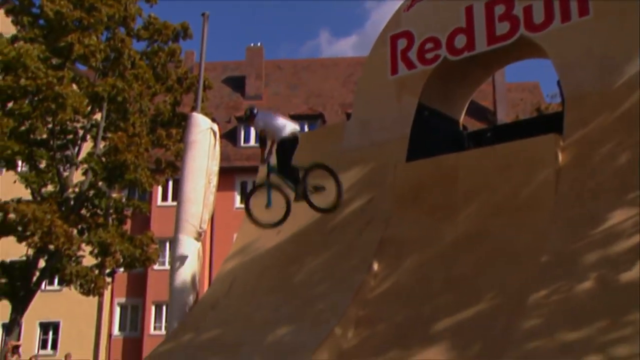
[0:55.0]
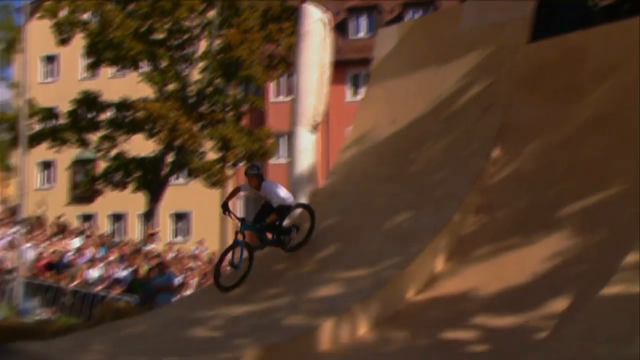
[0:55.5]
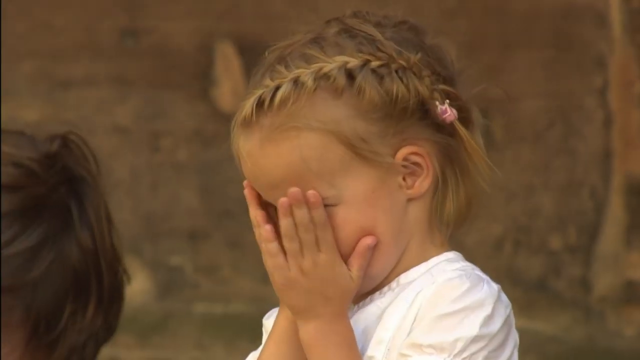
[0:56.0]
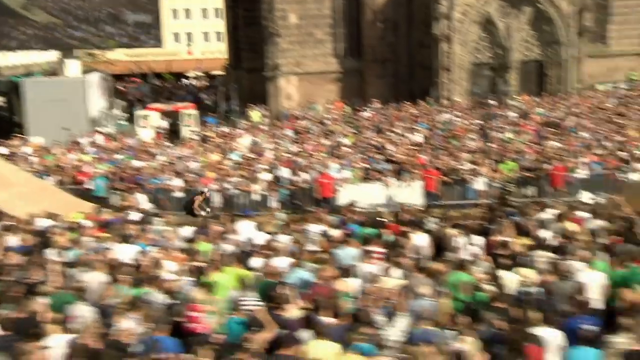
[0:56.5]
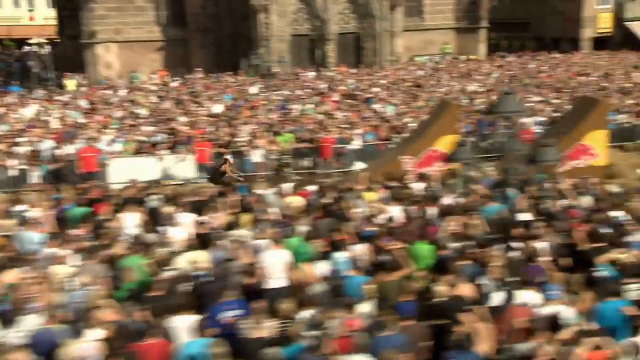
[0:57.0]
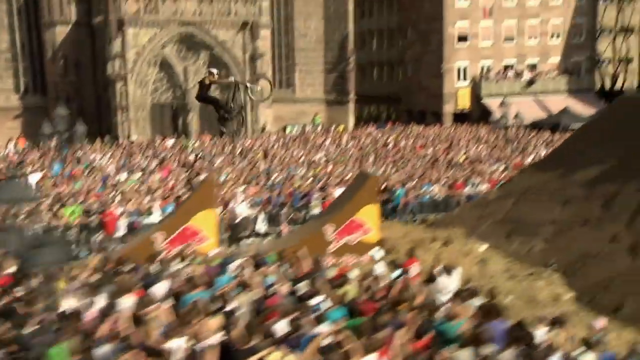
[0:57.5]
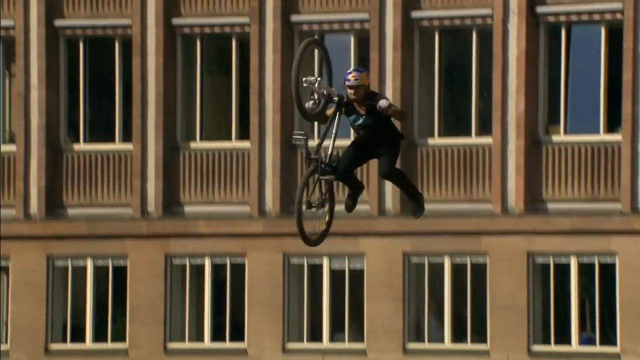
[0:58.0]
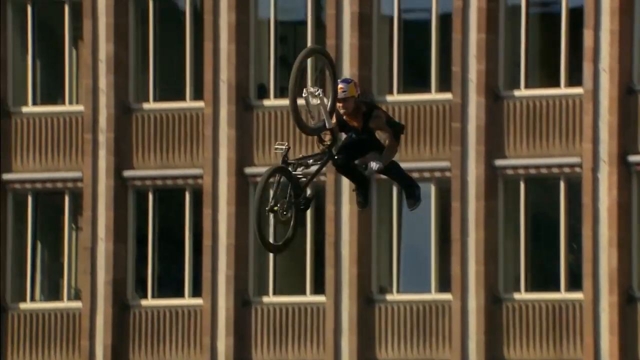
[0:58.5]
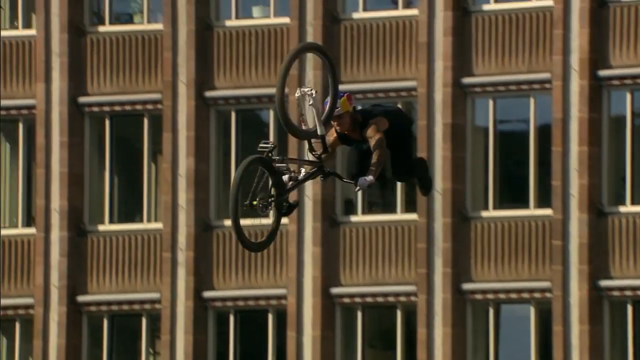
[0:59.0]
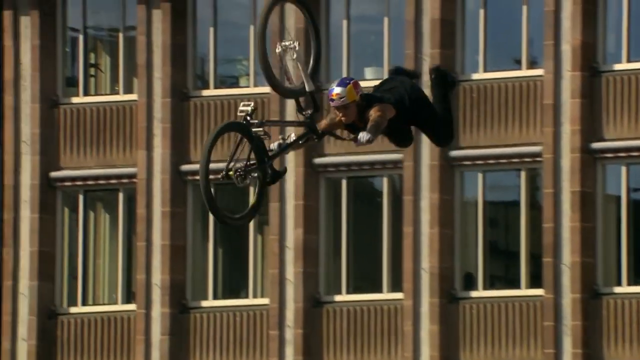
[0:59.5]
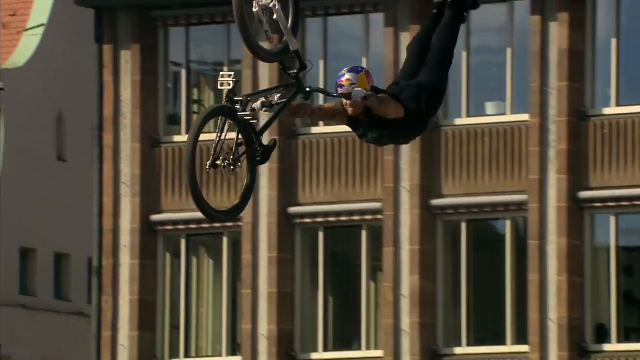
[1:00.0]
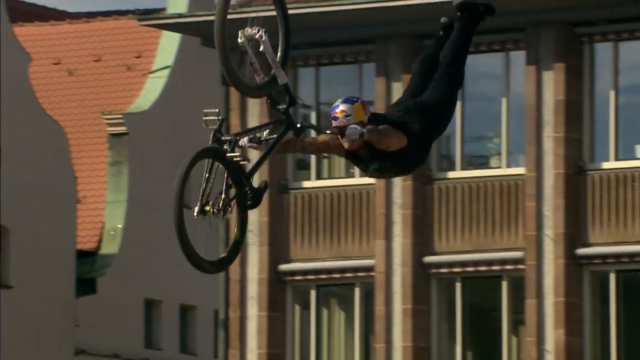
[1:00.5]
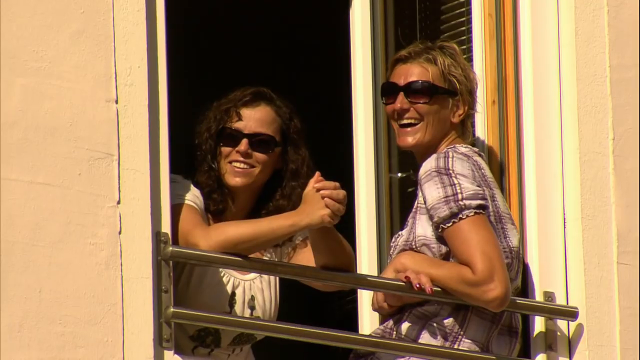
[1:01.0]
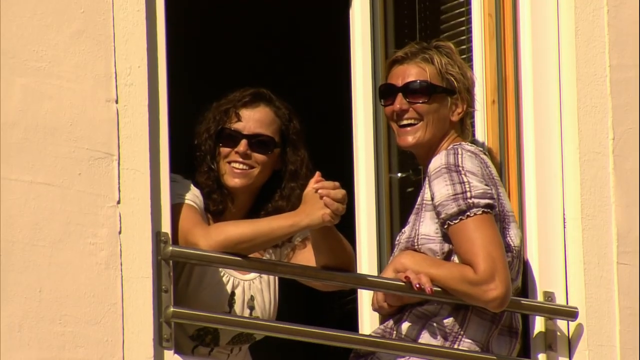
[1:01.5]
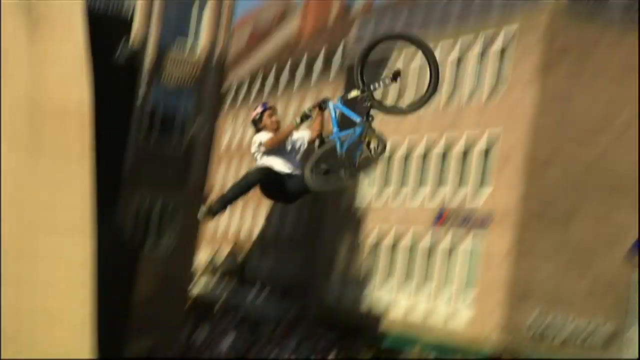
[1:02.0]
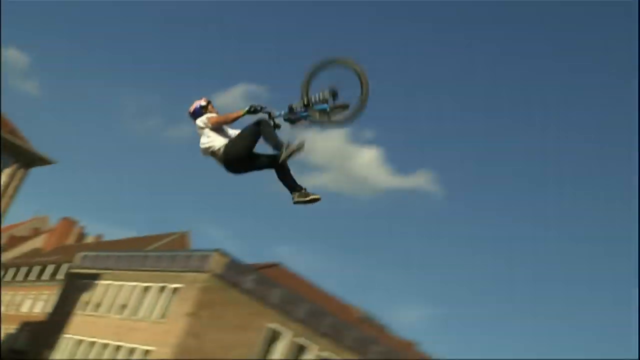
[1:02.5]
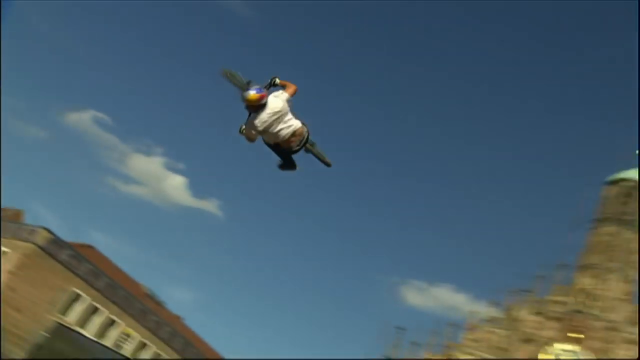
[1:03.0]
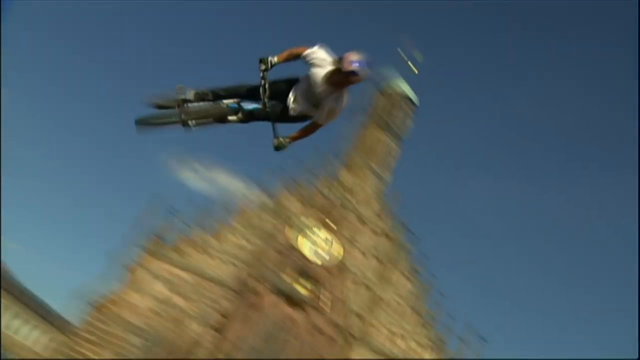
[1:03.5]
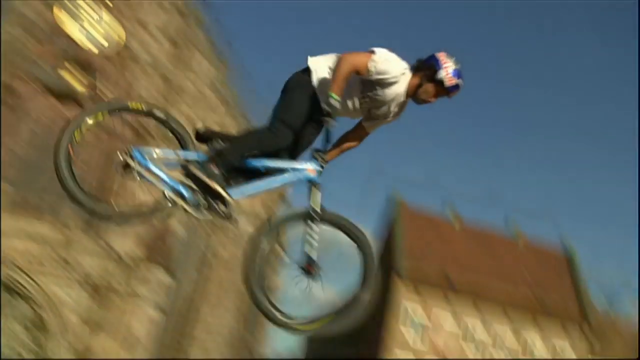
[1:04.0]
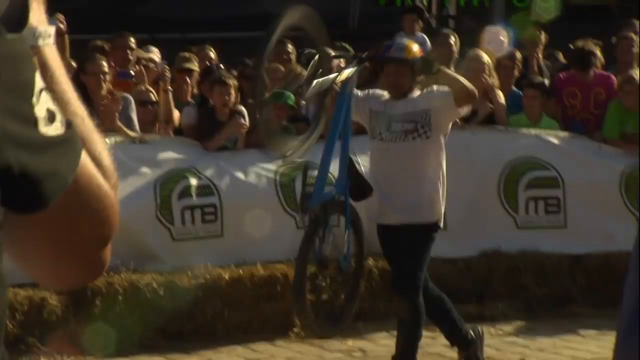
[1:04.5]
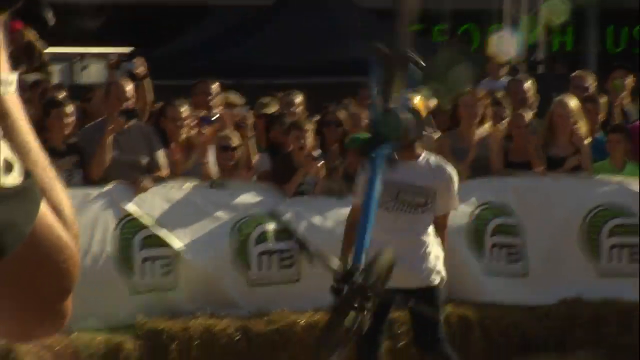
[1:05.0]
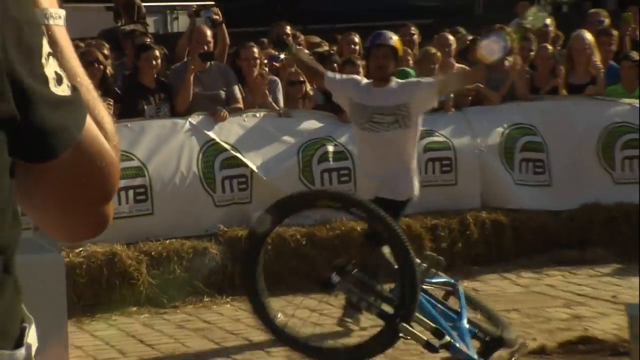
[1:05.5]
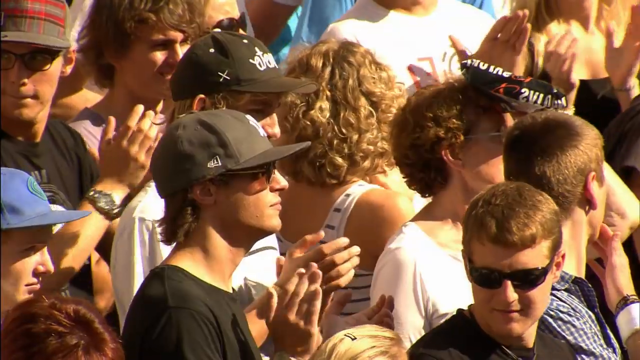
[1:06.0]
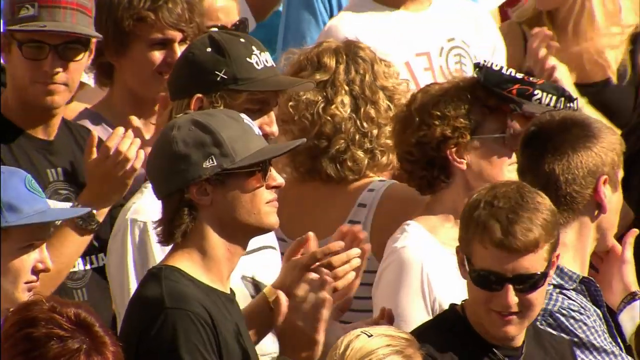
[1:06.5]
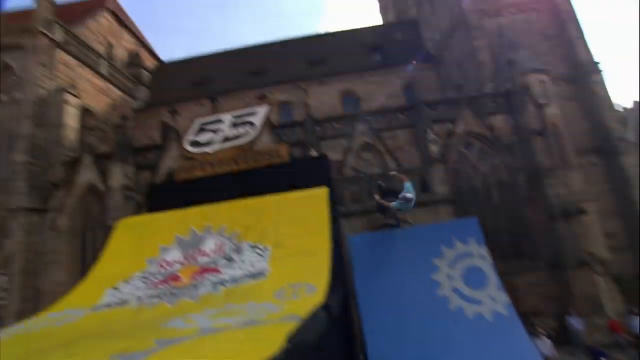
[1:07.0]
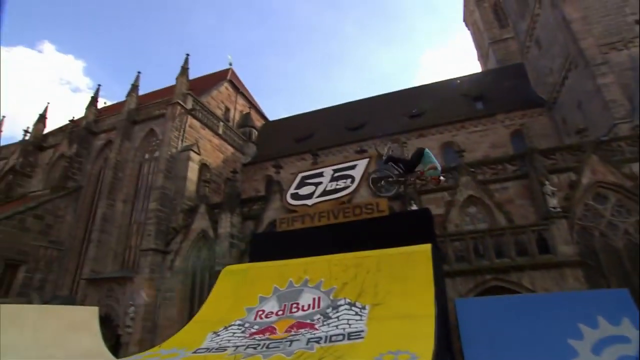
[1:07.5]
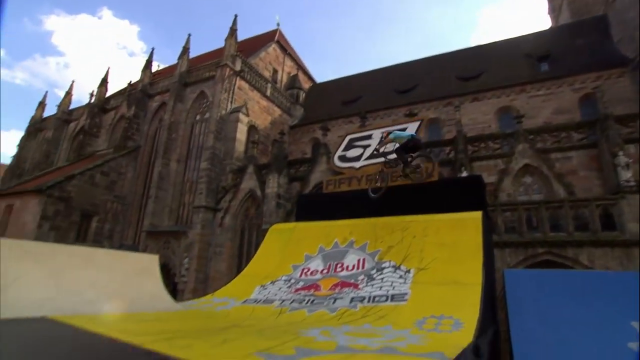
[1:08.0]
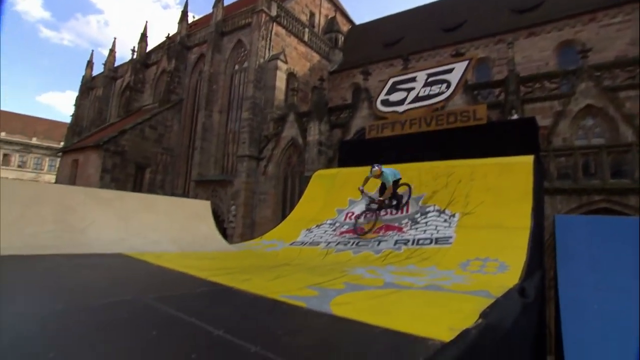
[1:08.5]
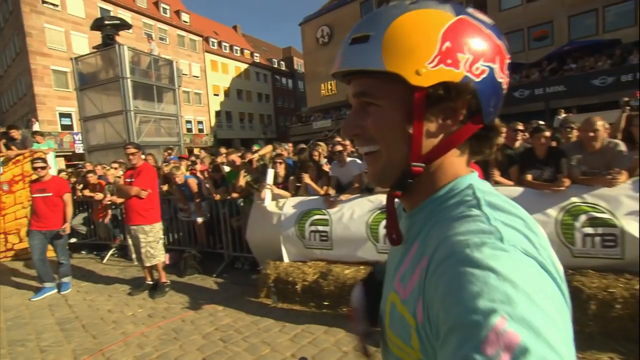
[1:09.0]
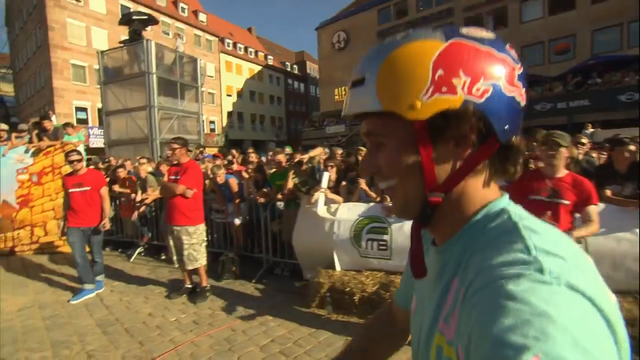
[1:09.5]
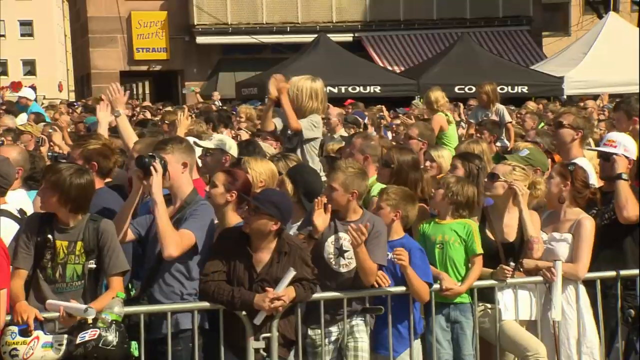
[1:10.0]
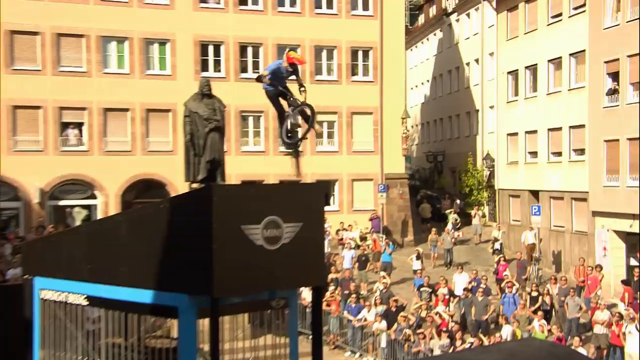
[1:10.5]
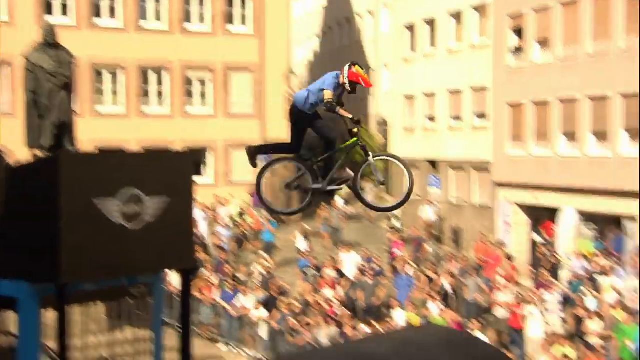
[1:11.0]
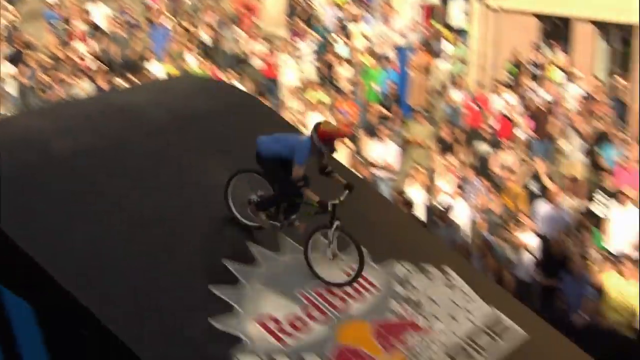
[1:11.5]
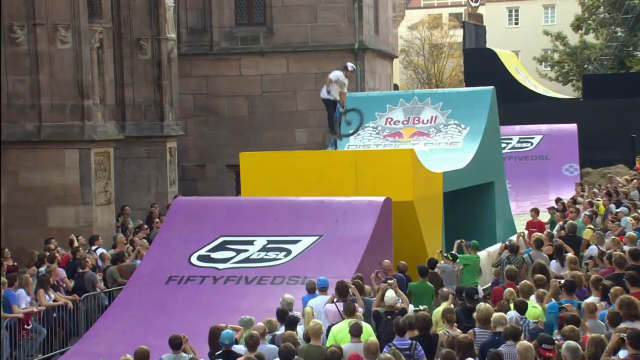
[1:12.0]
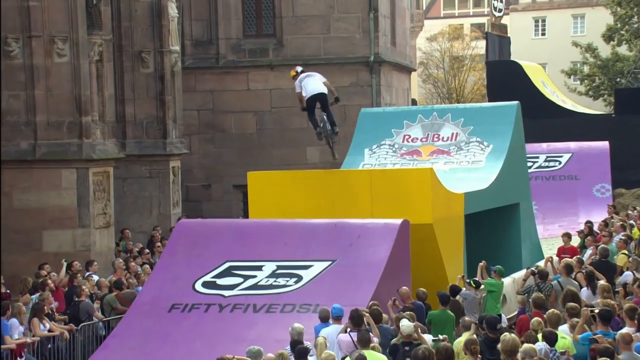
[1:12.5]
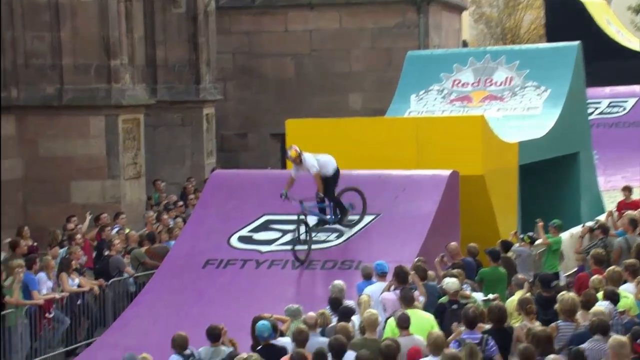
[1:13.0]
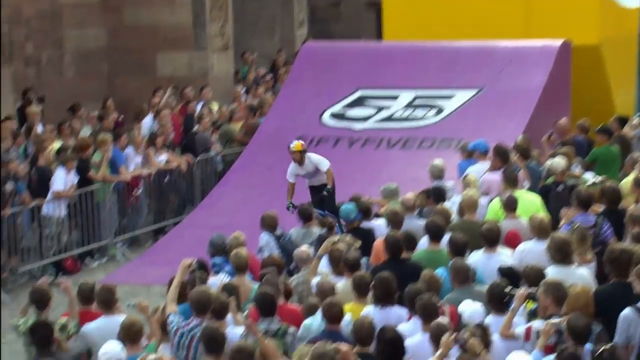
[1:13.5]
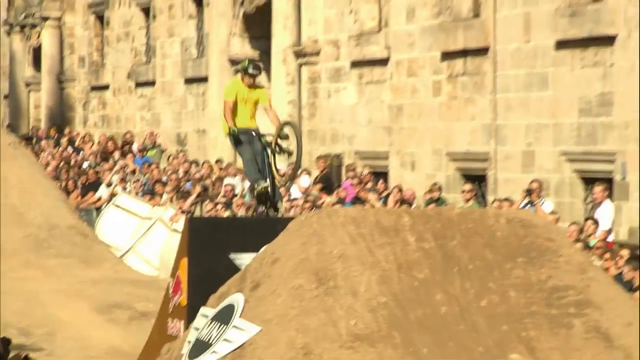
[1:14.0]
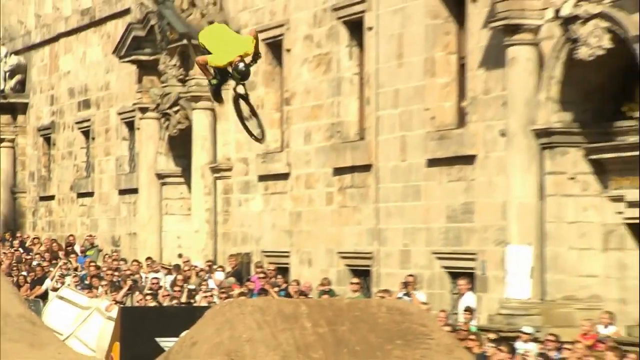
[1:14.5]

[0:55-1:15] At the extreme bicycling event, riders perform flips, twists, turns and very difficult landings. The event is in a city, with very large brick buildings and tall buildings in the background. The crowd stands up against metal fences that keep them in their area. Some bicyclists are almost flying through the air with their arms outstretched while still holding on to the handlebars. The crowd claps and cheers, and some people take video and pictures as the riders spin and soar. Many children sit on the backs of their parents or loved ones, including a little girl on her parent's back who covers her eyes, apparently afraid the riders might get hurt.